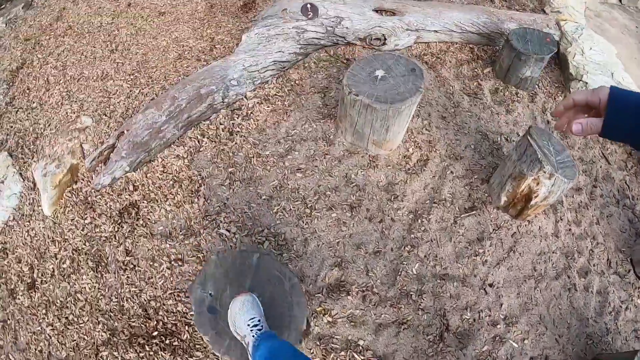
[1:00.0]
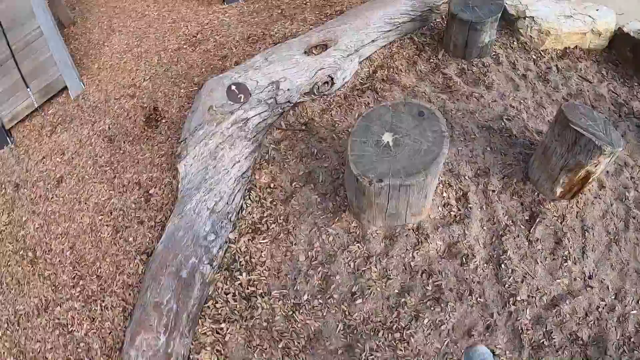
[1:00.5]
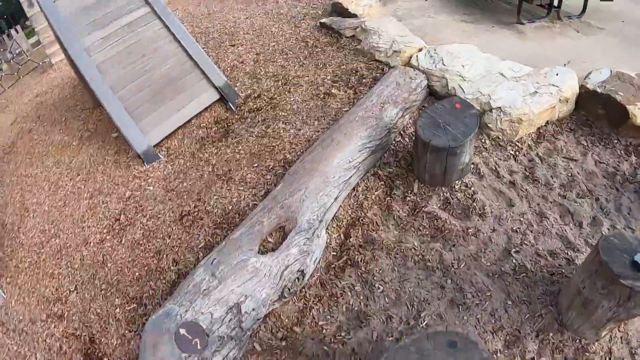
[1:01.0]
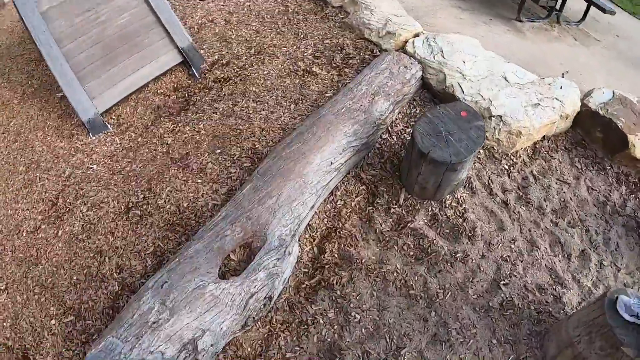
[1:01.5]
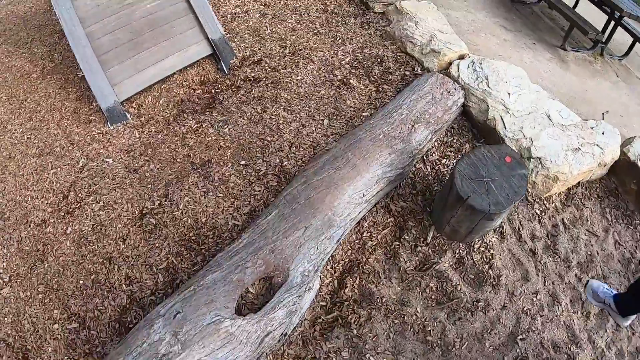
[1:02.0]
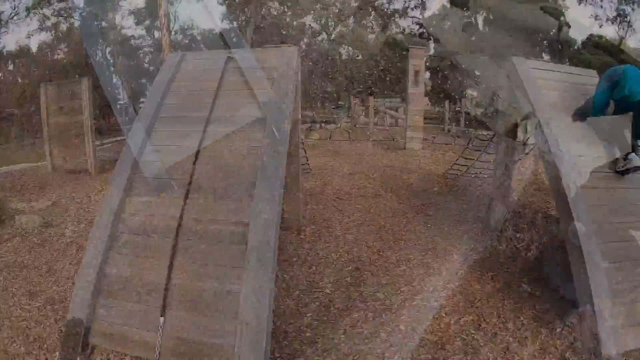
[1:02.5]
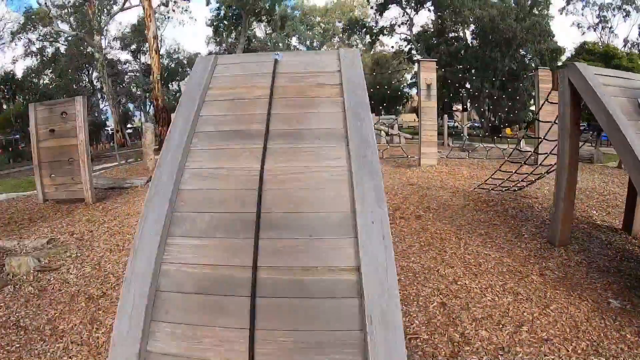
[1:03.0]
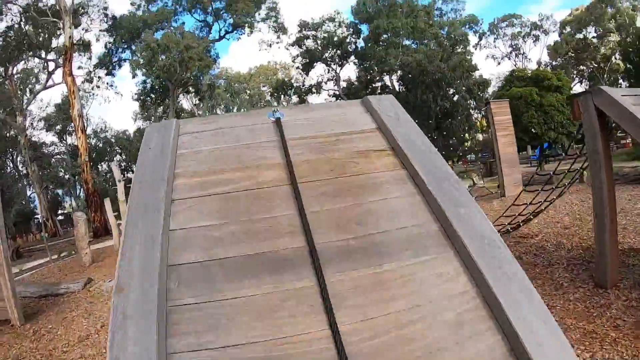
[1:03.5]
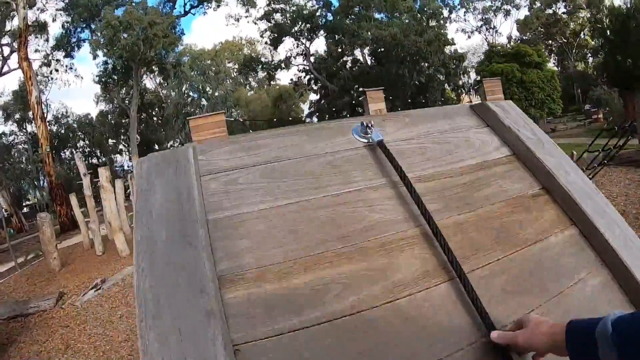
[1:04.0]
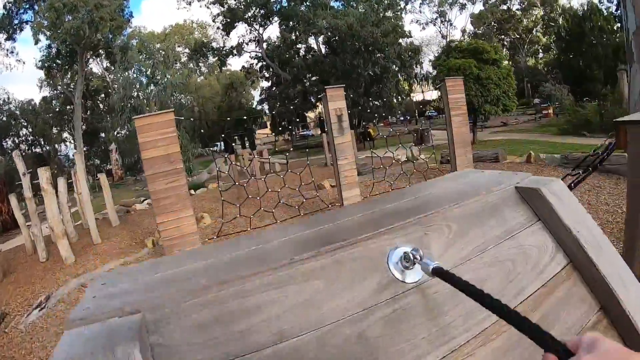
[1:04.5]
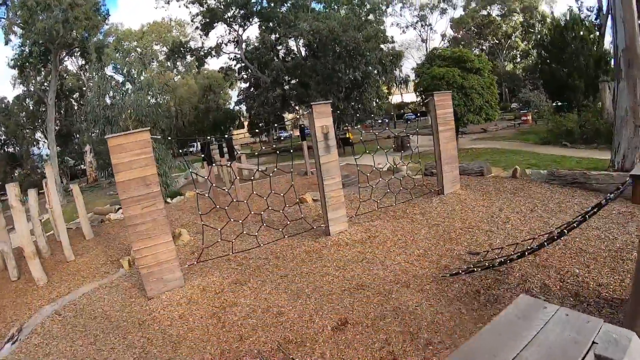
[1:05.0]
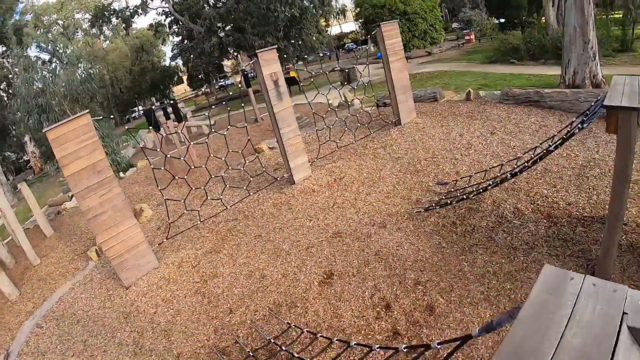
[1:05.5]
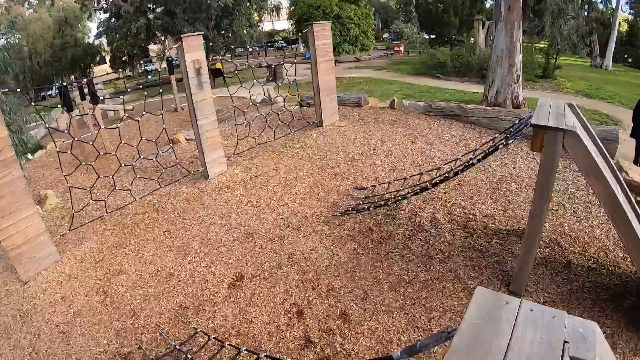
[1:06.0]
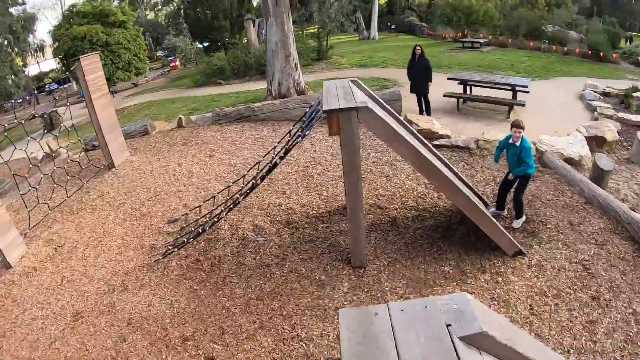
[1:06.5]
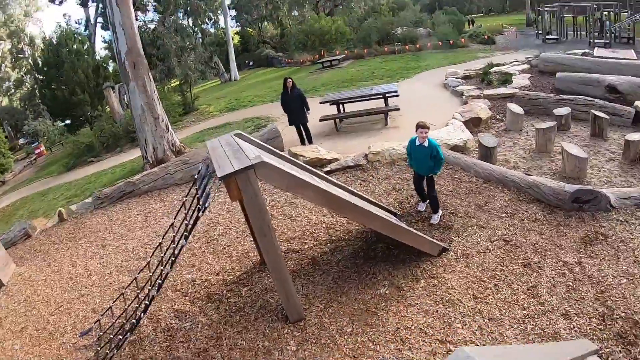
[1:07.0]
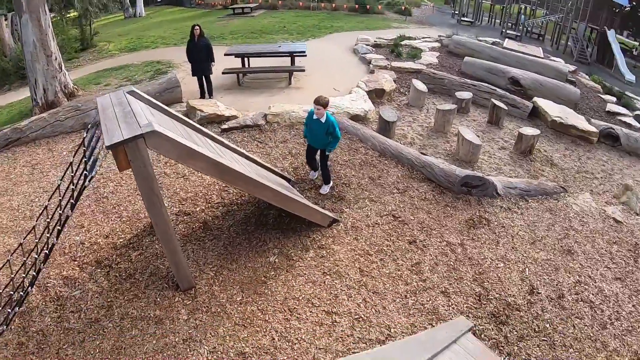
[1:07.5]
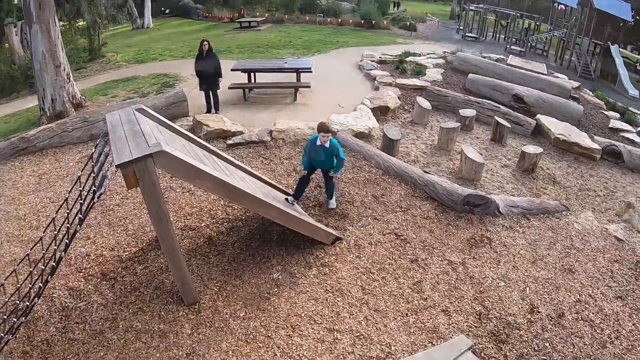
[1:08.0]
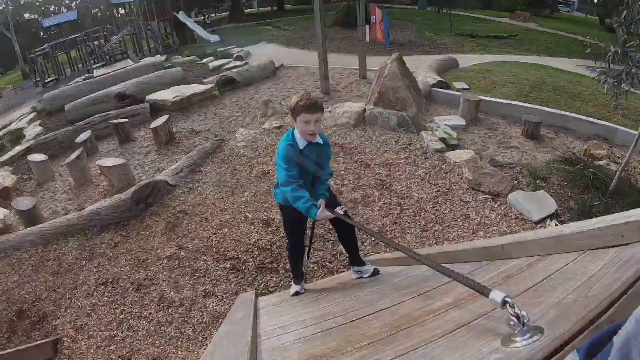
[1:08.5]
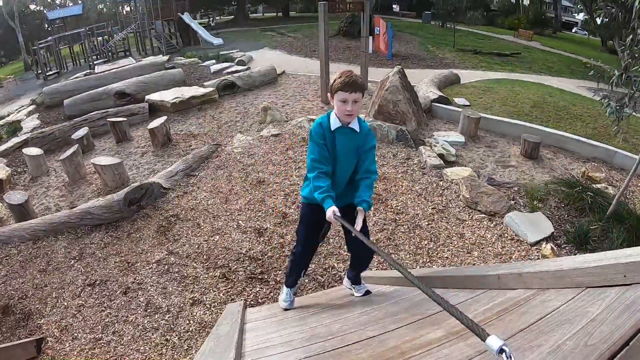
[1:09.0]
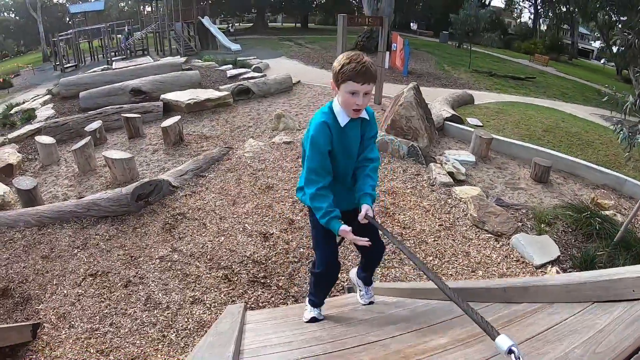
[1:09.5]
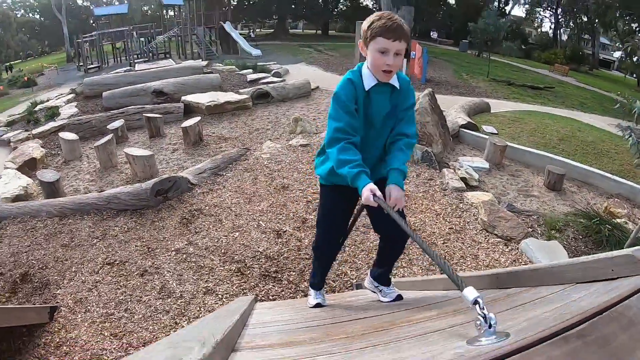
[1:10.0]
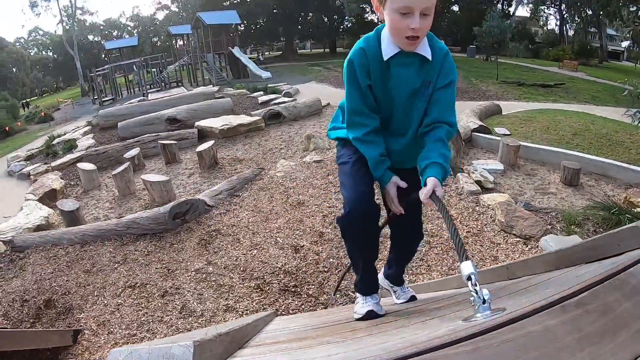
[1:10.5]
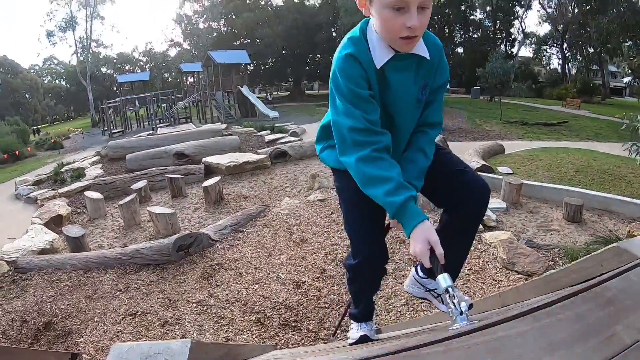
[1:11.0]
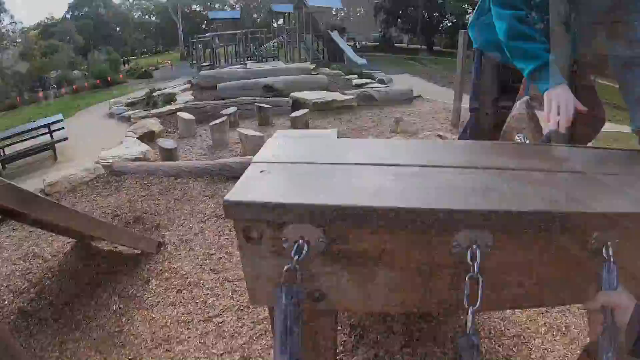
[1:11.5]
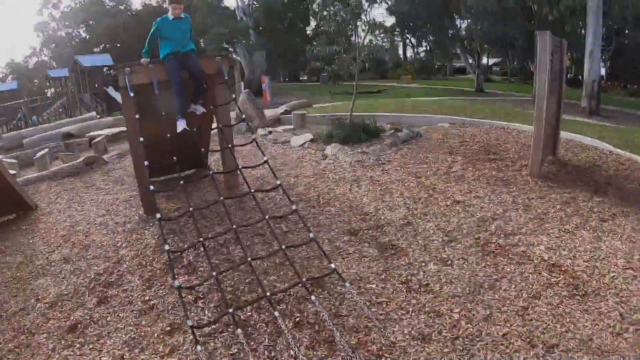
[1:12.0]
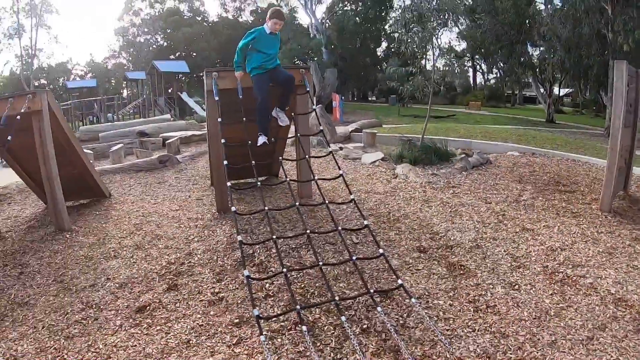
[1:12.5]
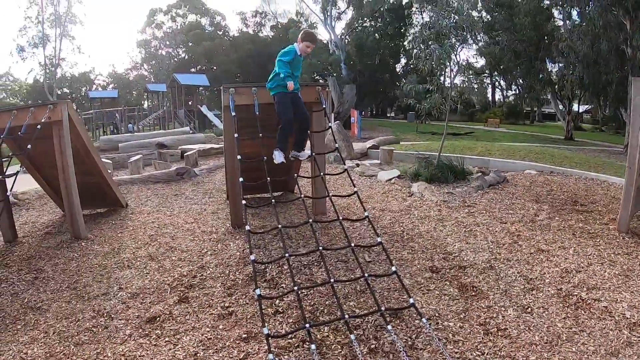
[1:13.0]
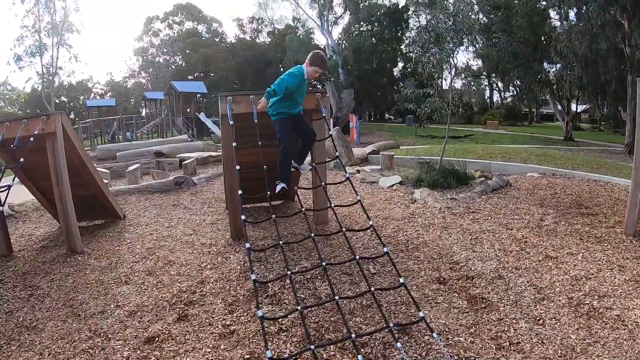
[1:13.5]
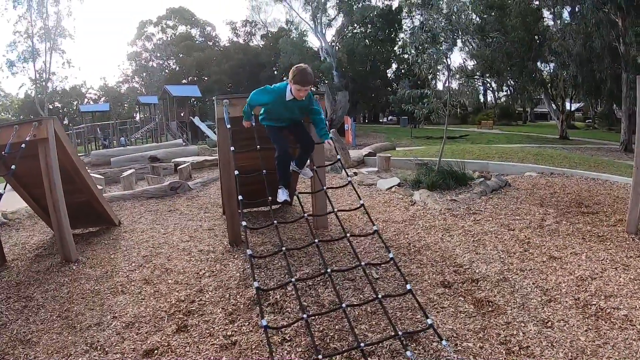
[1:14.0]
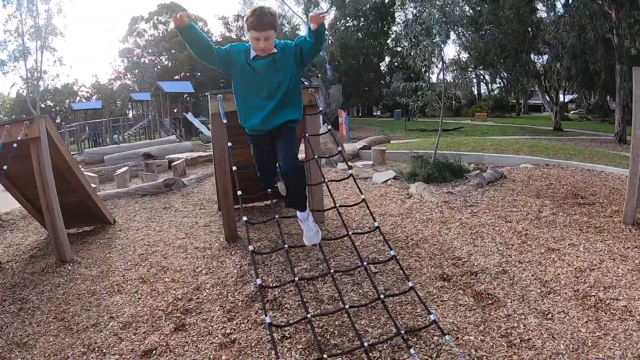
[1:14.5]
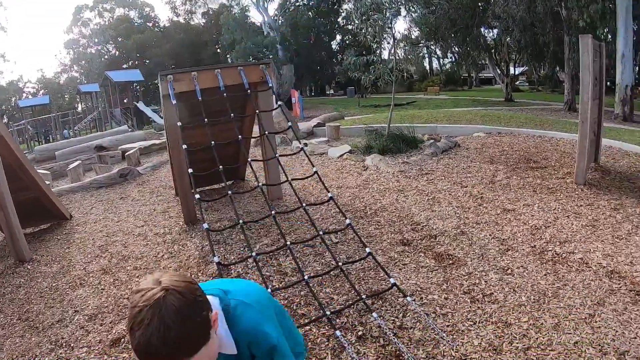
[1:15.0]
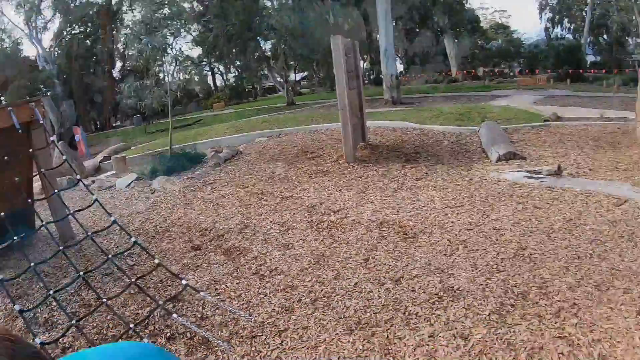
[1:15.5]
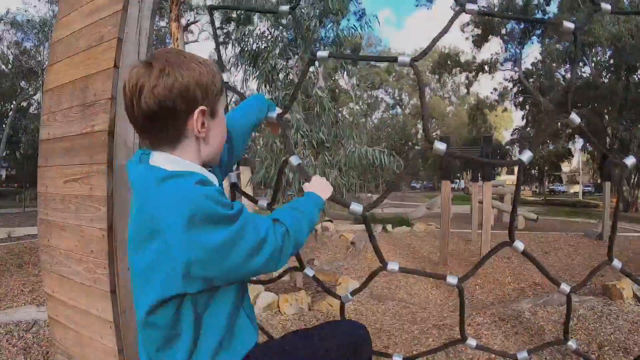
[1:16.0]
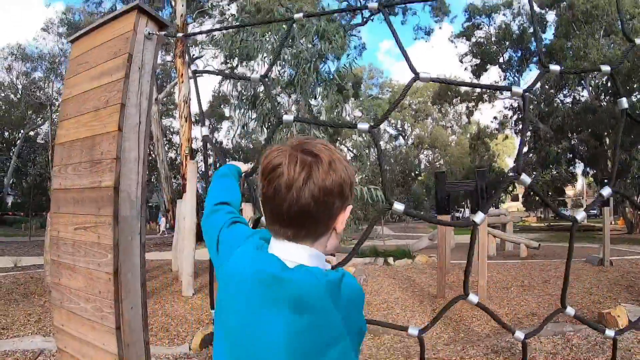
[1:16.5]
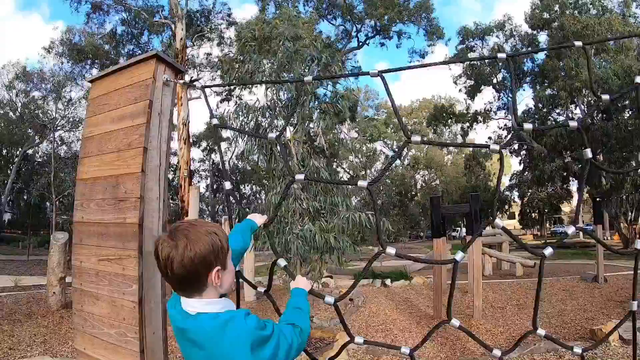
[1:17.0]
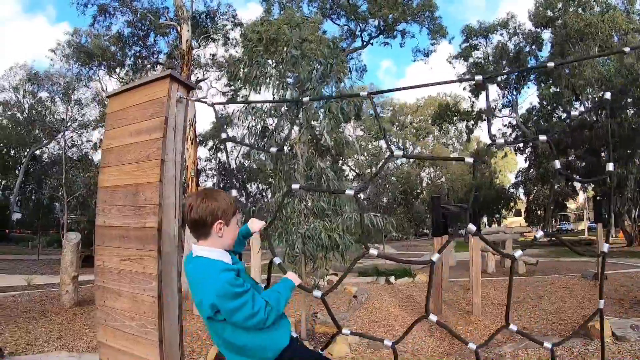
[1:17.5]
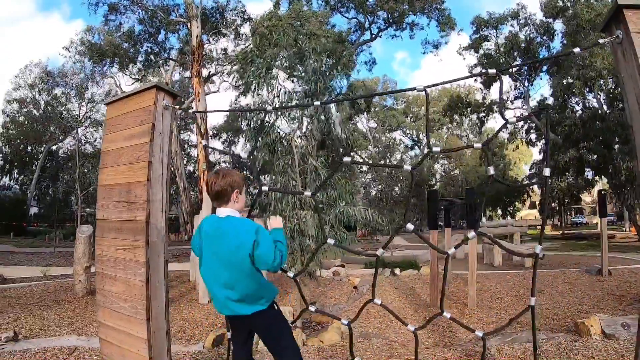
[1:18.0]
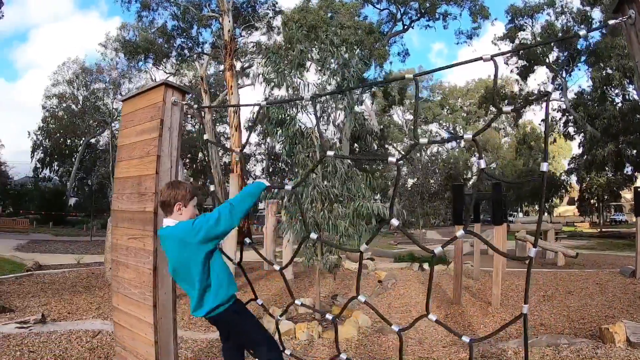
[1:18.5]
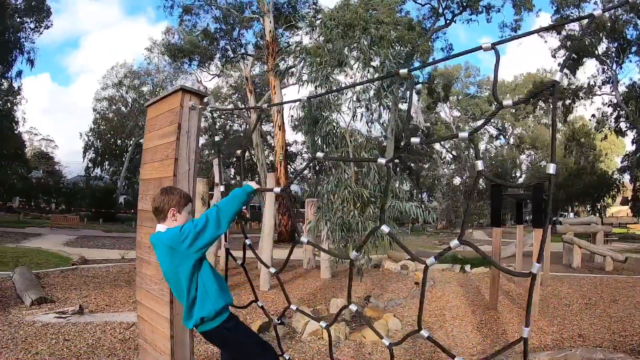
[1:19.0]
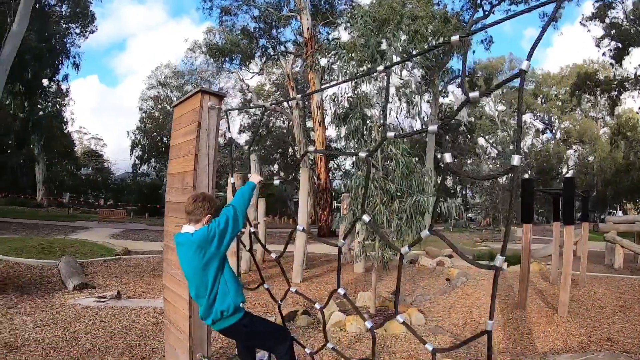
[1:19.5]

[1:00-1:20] Cut-off logs appear to be sunk vertically into the ground, their tops cut at an angle, and the little boy steps from one log to another. He scales a slanted wooden board that has a rope to pull himself up with, then goes back down the other side, which is a crawl net of connected ropes. He then climbs up another crawl net in a different place, separate from the first. The footage is probably filmed from the man's point of view, and the camera moves from one attraction to another.